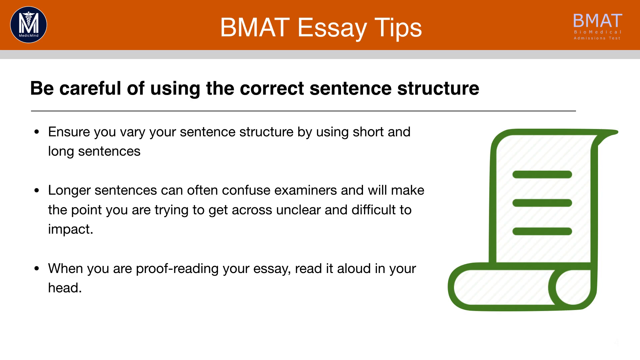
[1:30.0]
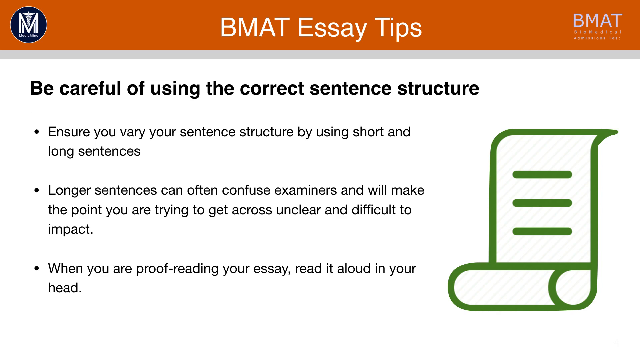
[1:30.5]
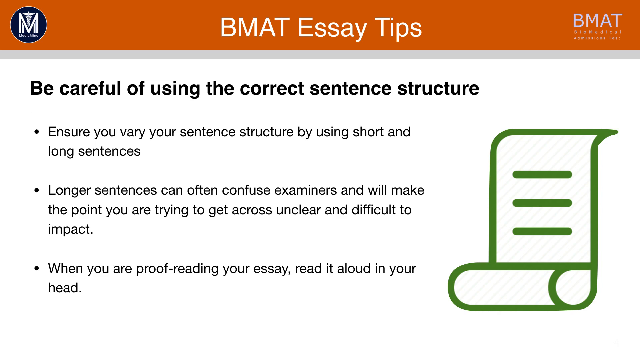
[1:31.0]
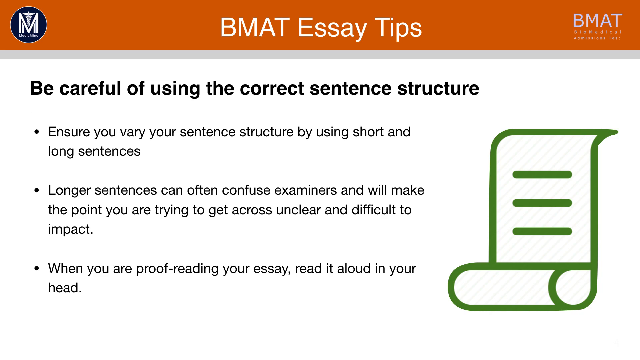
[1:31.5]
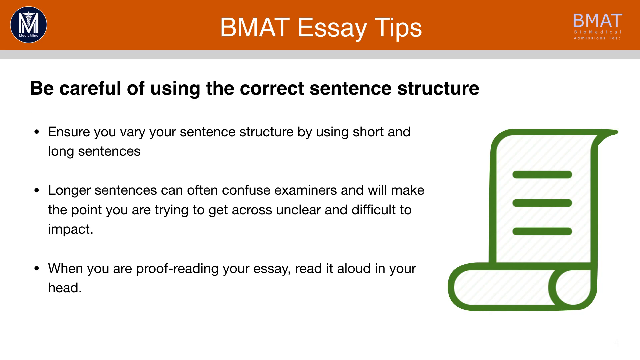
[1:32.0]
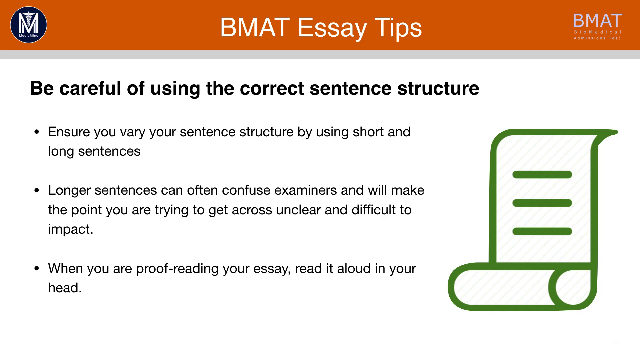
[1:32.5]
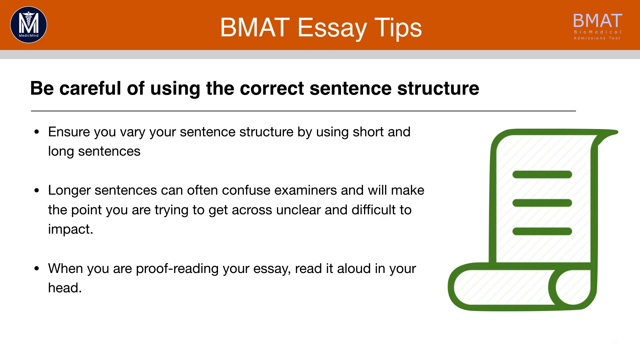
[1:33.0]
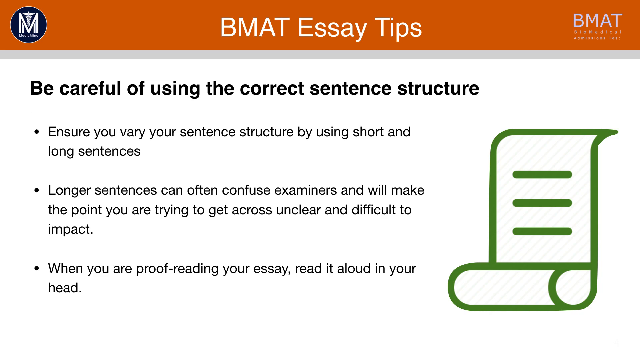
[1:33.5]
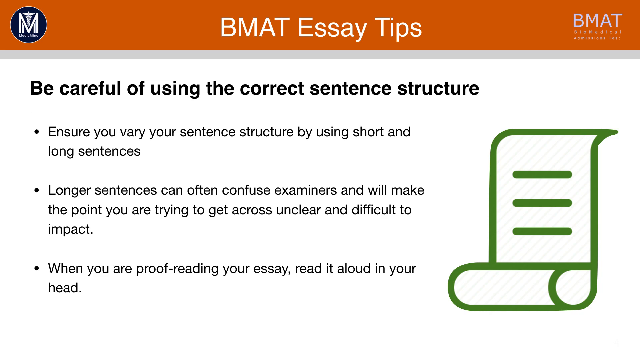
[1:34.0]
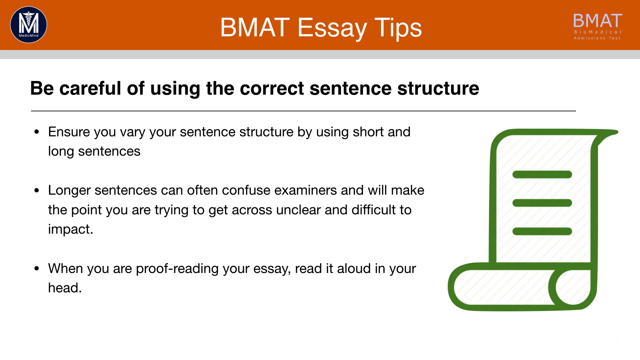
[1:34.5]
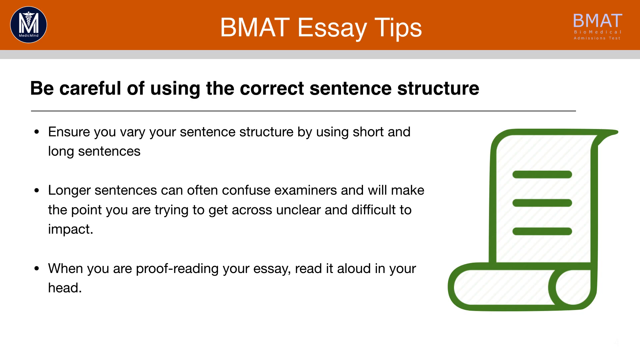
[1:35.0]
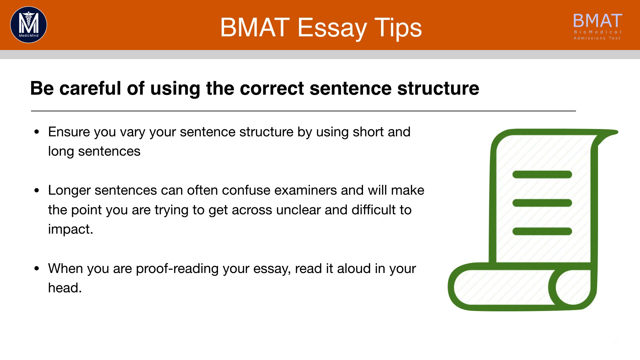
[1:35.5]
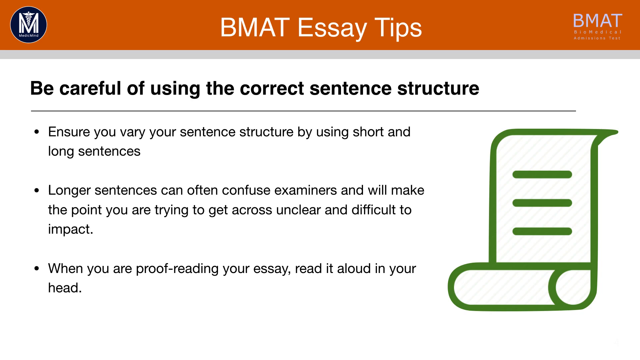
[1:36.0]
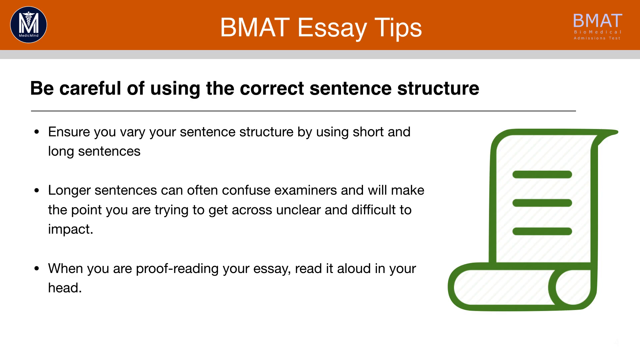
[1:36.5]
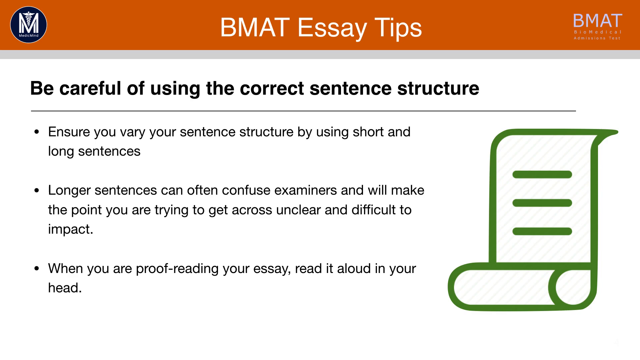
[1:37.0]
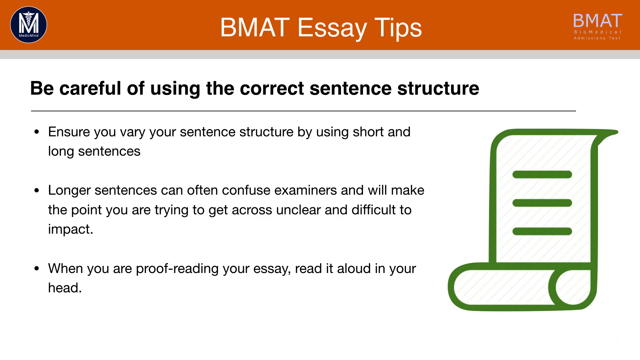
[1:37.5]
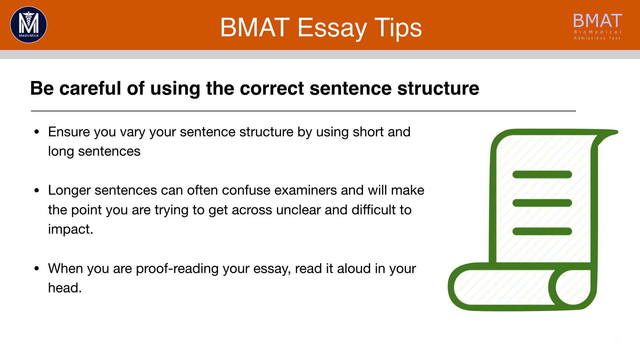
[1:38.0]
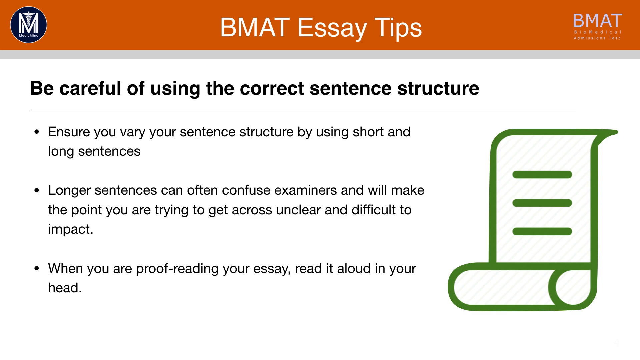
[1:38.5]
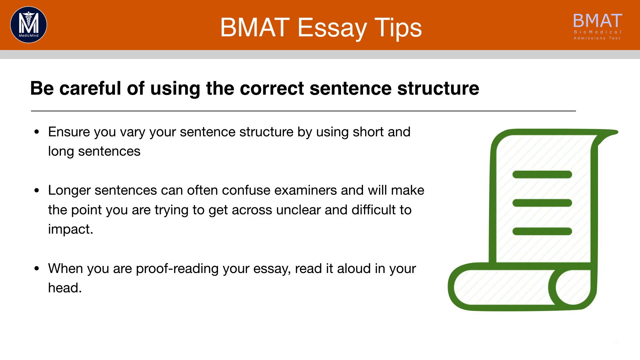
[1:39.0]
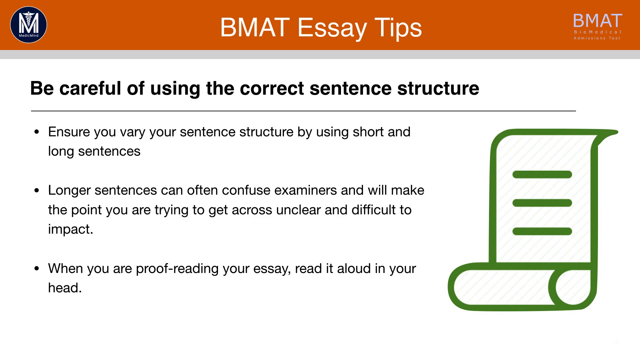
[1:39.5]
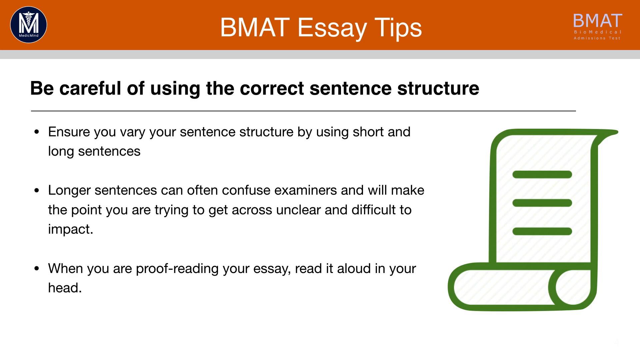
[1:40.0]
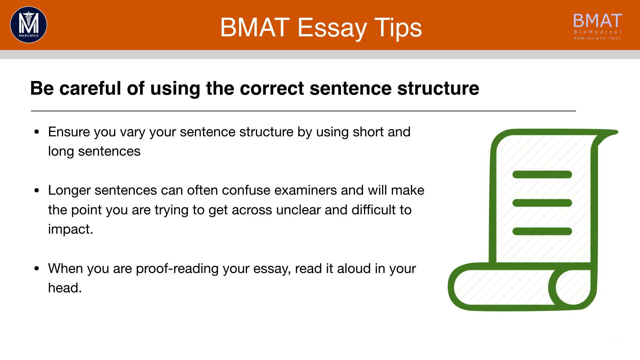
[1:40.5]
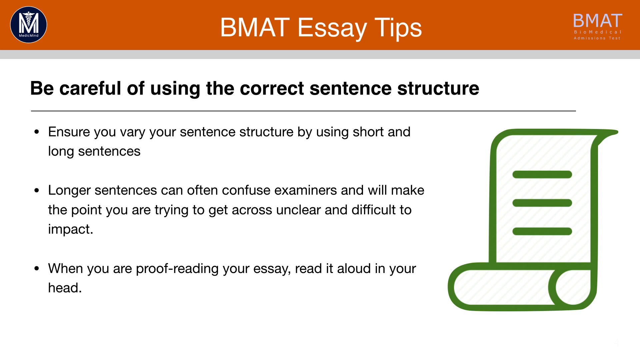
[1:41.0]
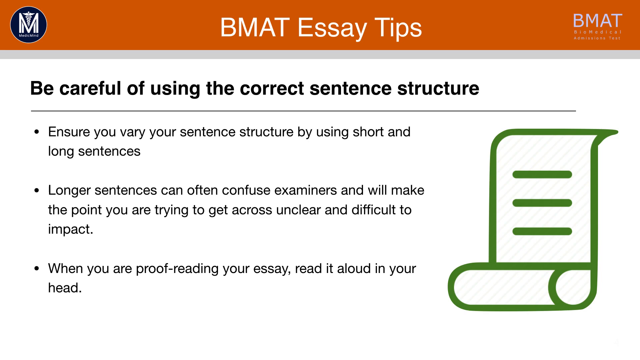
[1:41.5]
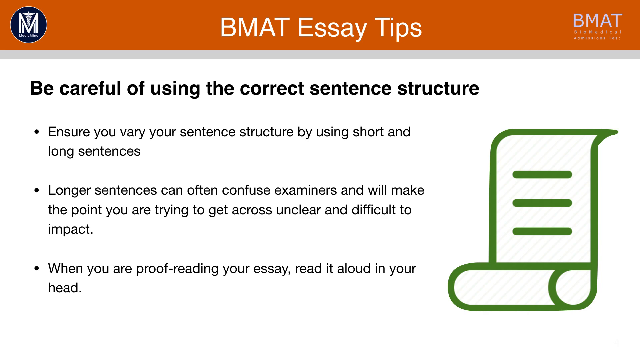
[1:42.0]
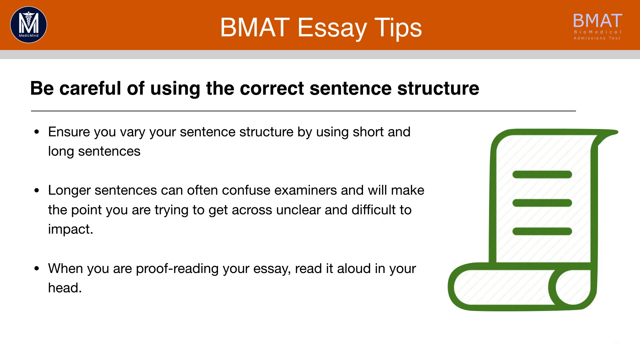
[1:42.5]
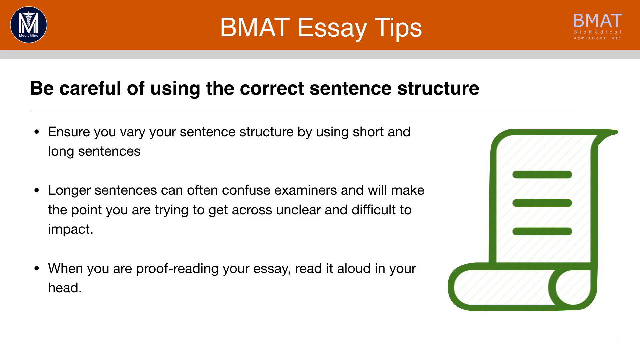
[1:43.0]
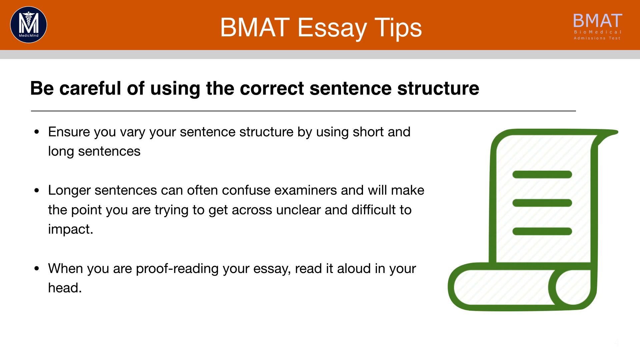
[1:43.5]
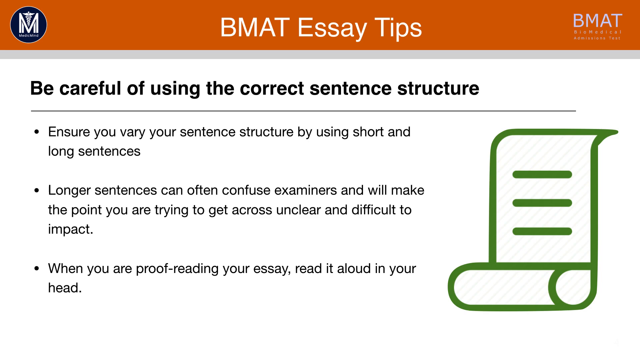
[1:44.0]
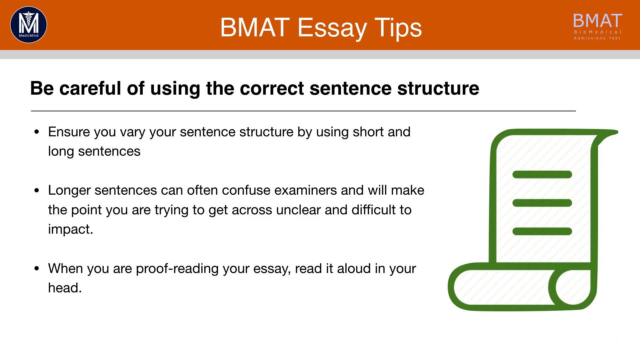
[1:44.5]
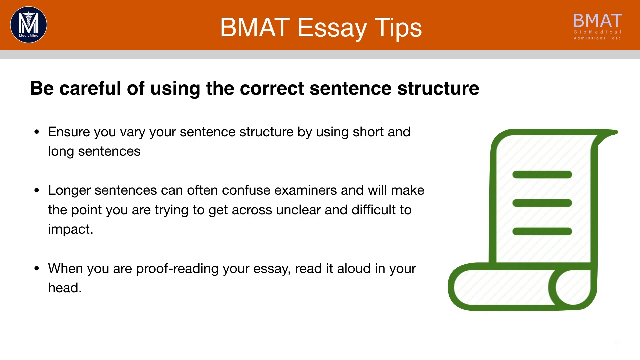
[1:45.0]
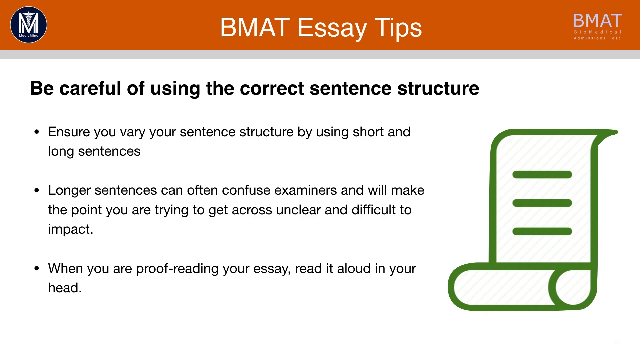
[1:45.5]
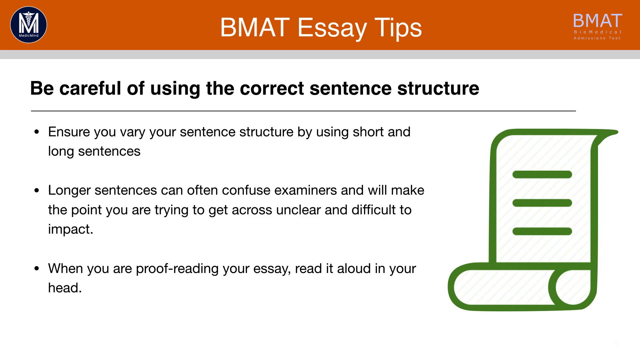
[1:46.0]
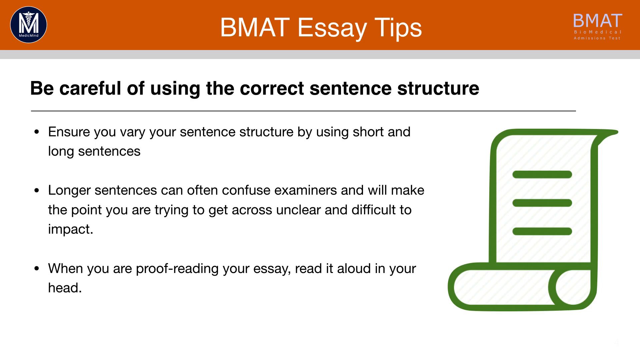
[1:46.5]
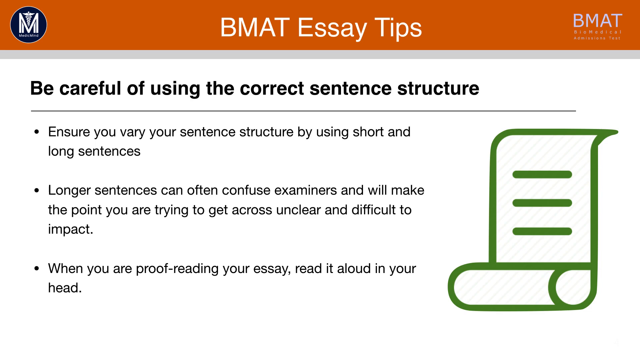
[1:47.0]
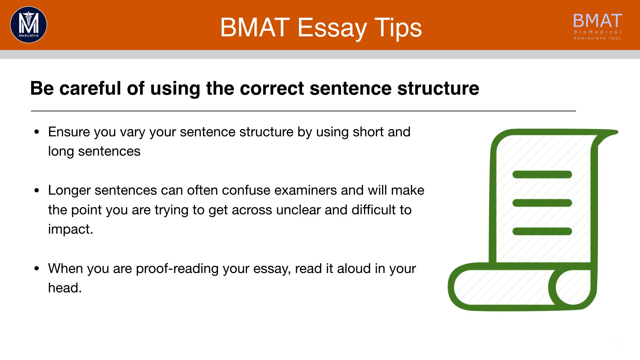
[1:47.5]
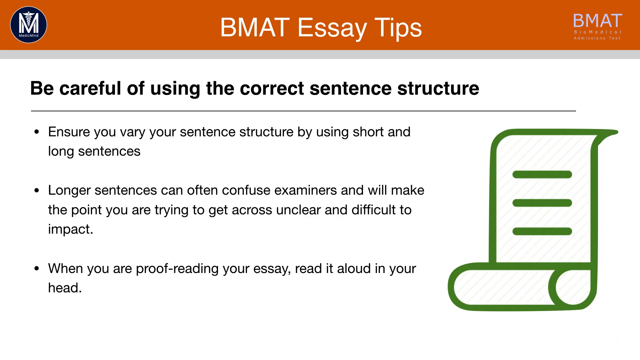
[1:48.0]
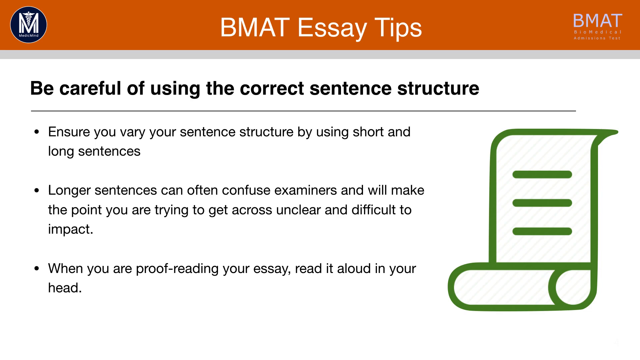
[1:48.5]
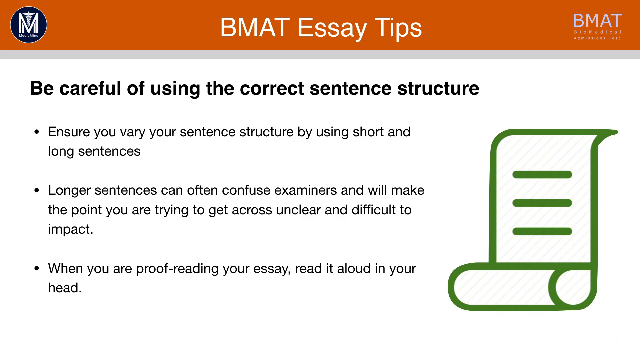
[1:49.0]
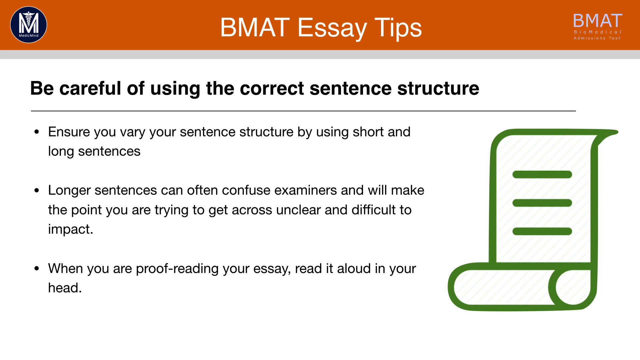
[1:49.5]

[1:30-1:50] The image remains on screen, unchanging: the orange overlay at the top, the white and blue logo at the top left with the large white M and the cane with the wings, the BMAT logo at the top right, and black text below reading "be careful of using the correct sentence structure". Underneath are three separate bullet points containing different instructions on correct sentence structure, including information on getting your point across and helpful tricks. On the right side of the screen is a green and white document logo, folded up with three lines of text on it, taking up 25 to 30 percent of the screen while the rest remains white. The static slide stays throughout.